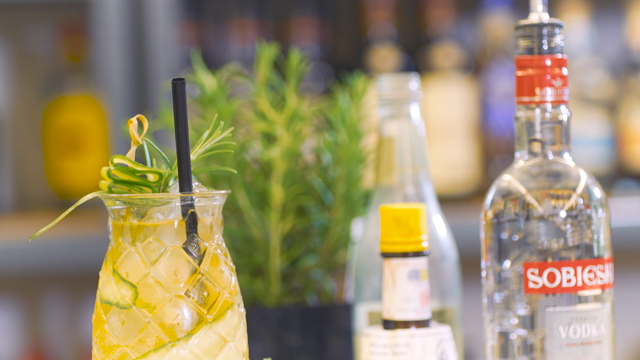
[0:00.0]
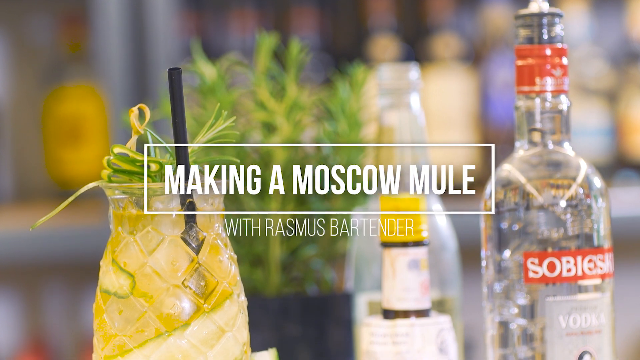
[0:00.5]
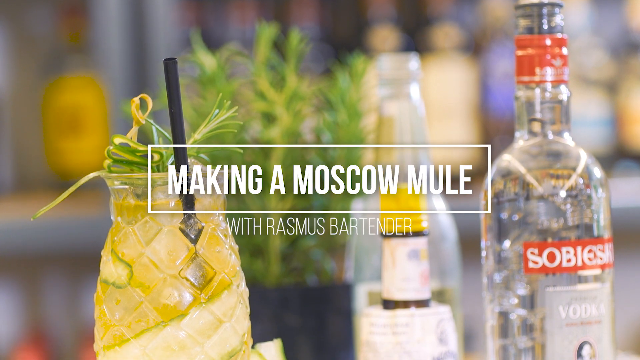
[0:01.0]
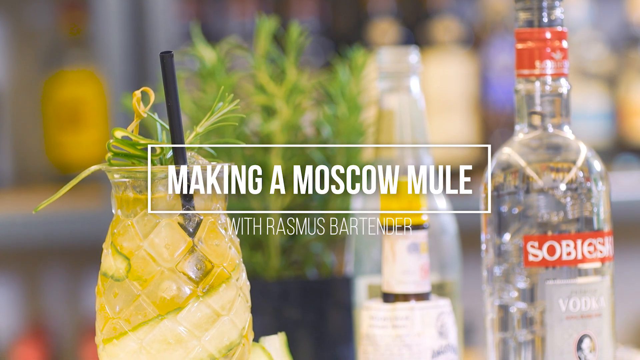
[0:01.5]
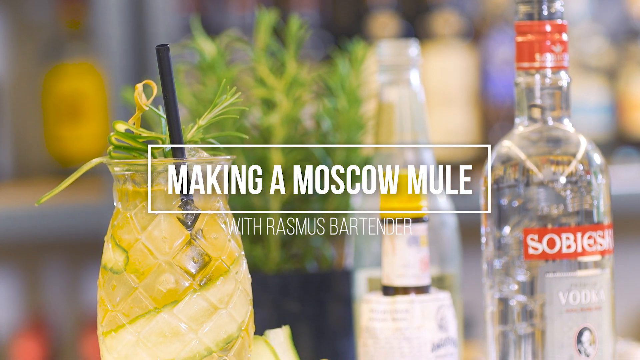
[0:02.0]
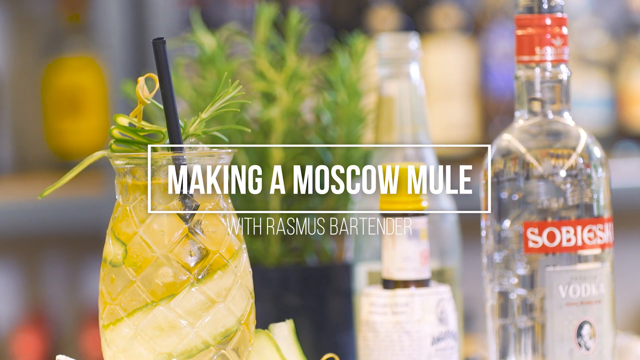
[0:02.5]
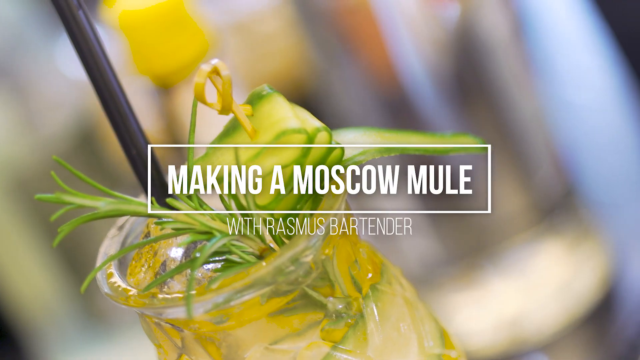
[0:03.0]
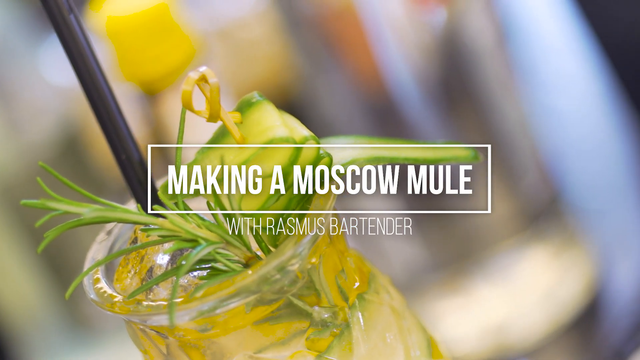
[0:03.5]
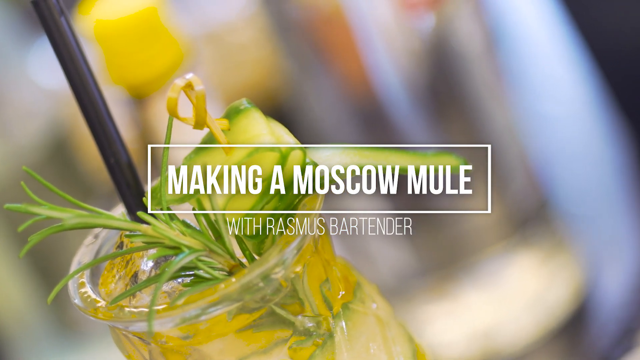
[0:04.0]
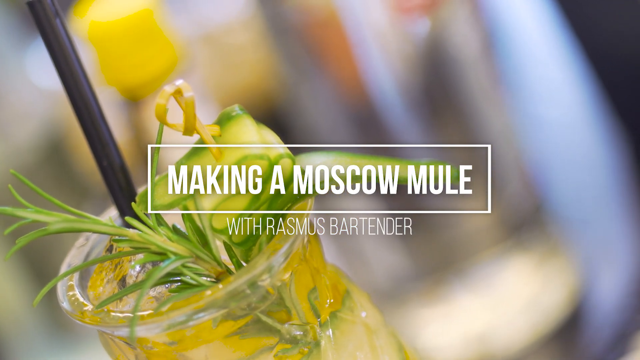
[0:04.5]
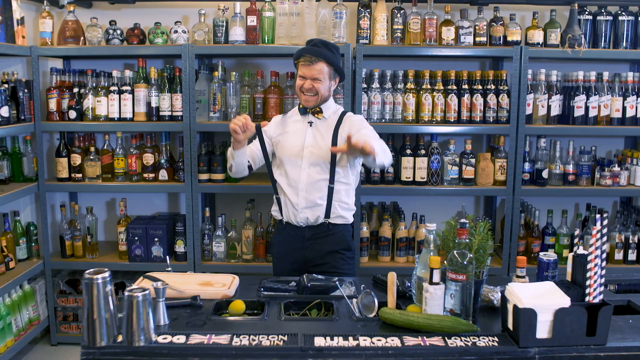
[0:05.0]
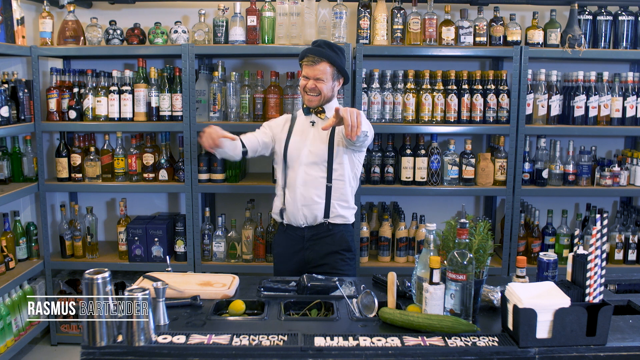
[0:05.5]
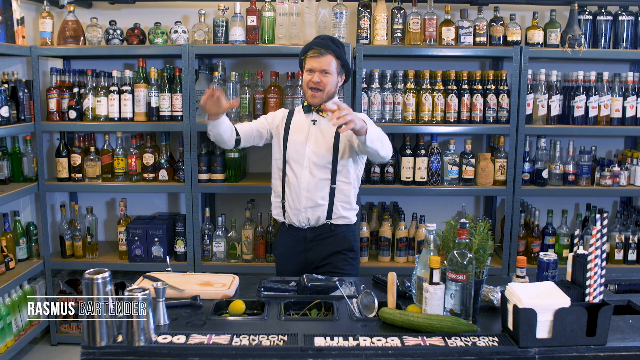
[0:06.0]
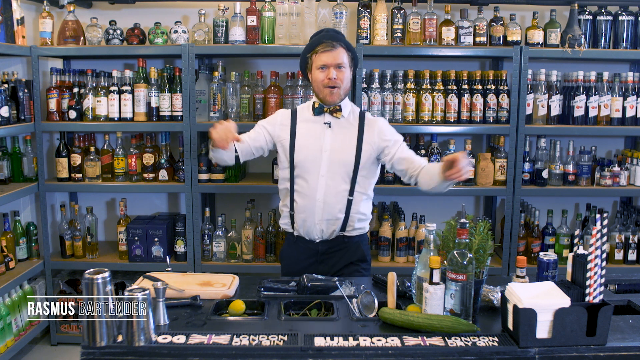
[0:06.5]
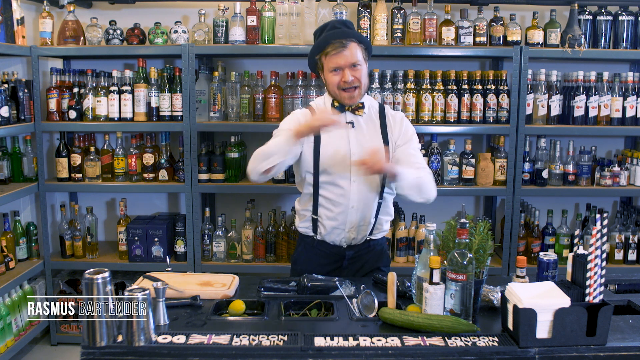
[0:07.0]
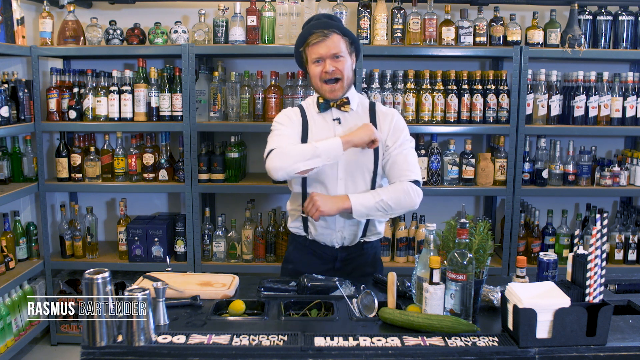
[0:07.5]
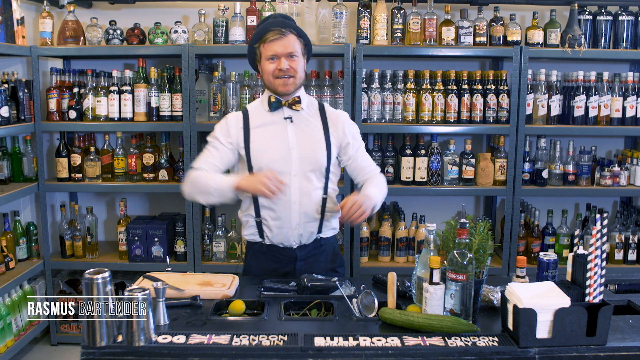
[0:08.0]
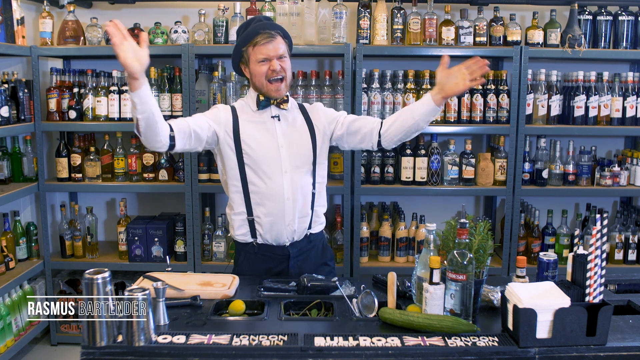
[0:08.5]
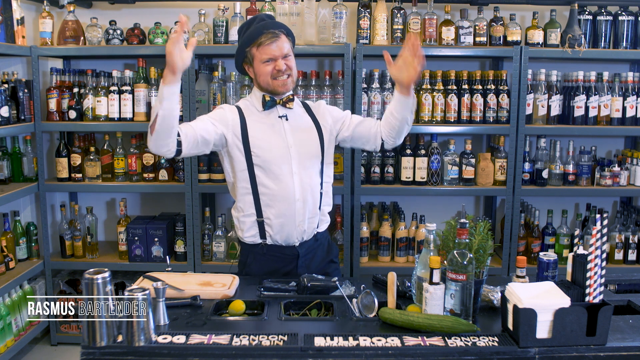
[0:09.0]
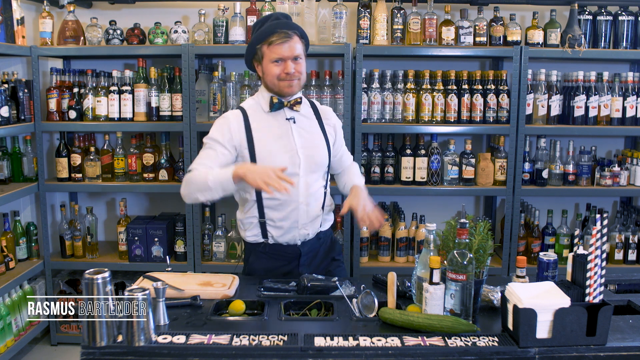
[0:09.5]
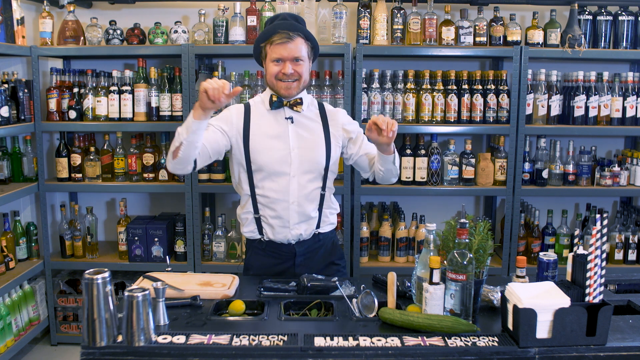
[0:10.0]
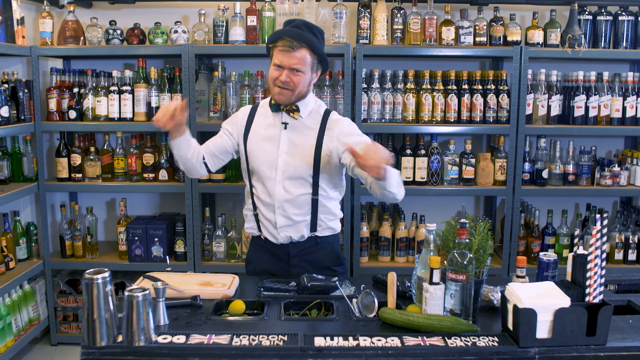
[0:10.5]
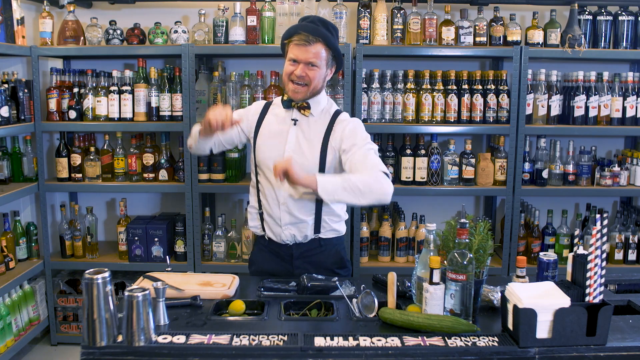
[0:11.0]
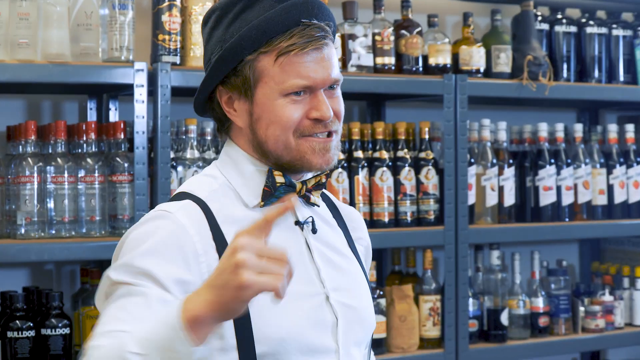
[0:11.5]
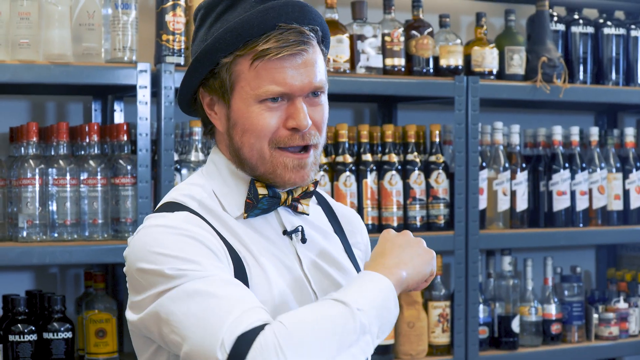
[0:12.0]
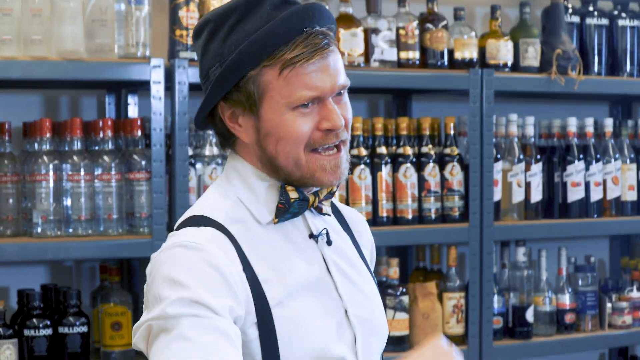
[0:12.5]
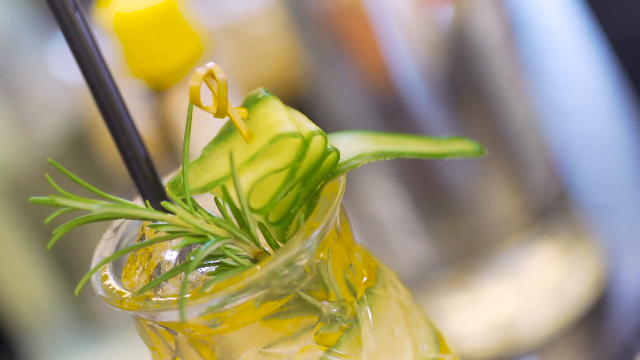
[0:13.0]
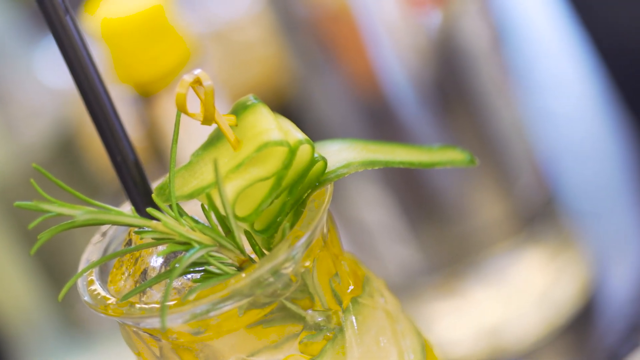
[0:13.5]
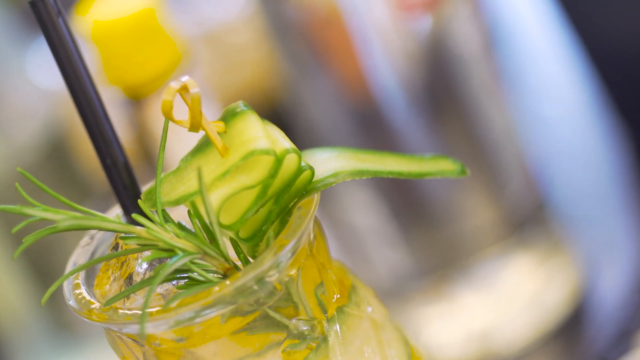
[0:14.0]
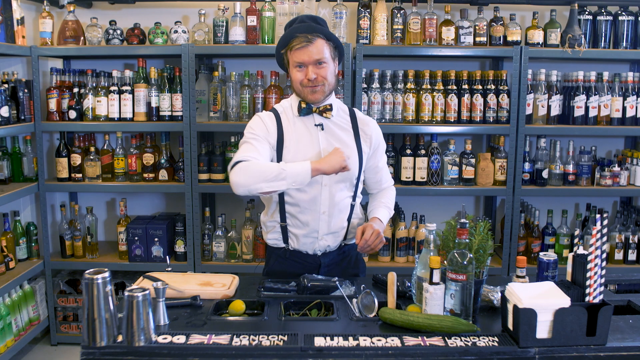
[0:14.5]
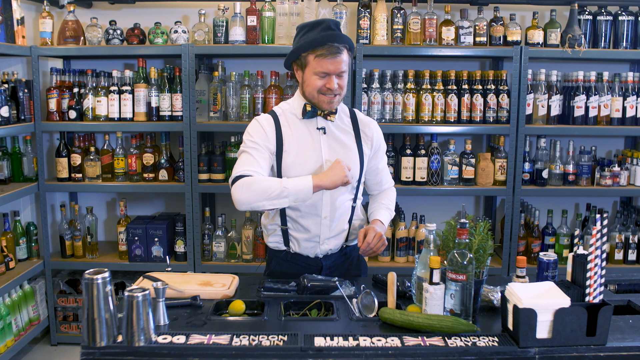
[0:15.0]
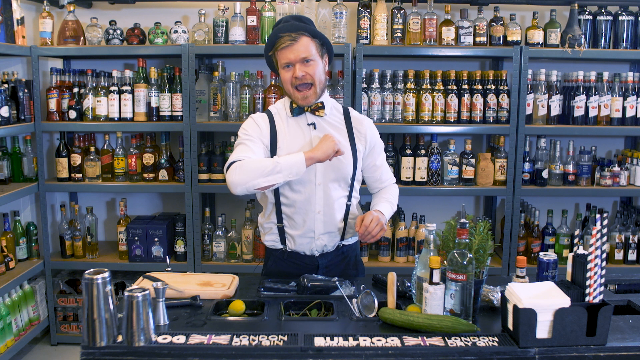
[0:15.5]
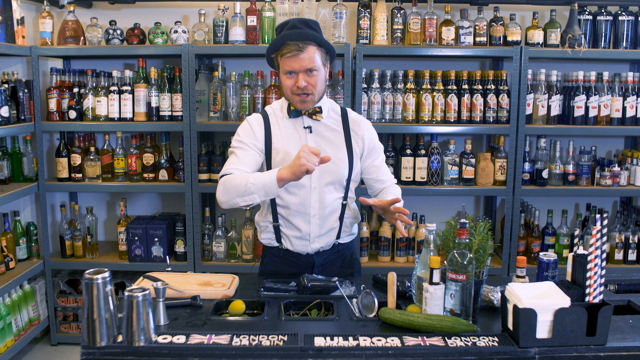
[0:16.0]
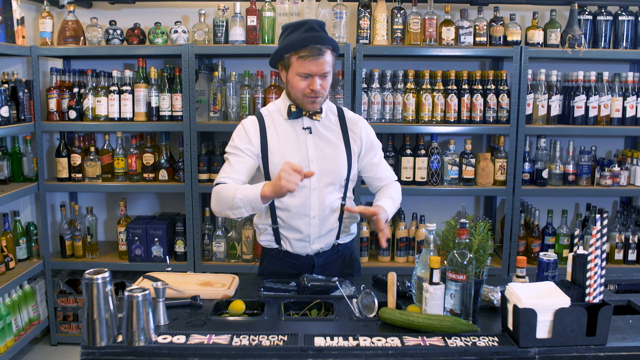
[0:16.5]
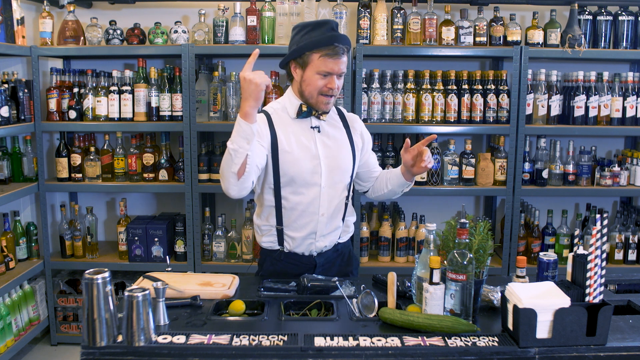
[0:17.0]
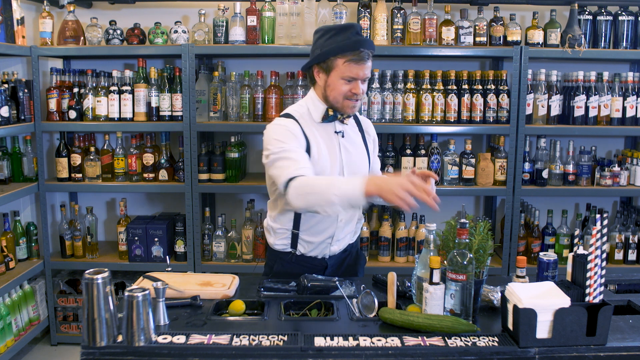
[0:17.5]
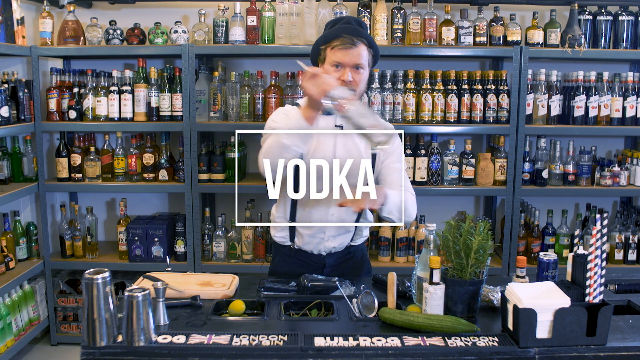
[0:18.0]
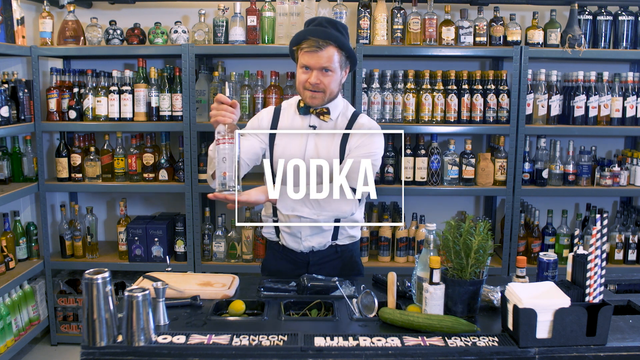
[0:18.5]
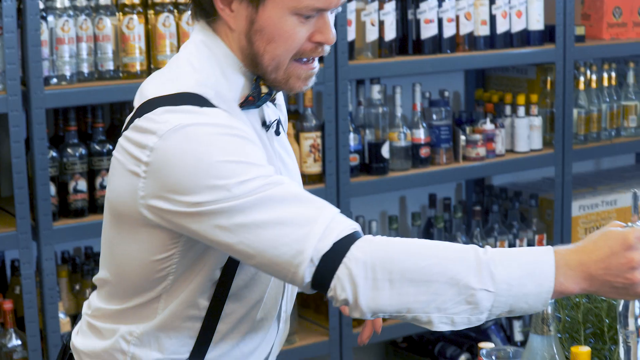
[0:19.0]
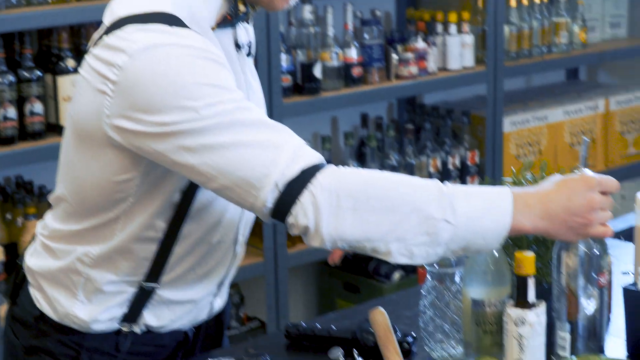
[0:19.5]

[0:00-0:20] The video opens on a still shot of a bottle with white text on a red banner, and next to it a jar holding a drink with a black straw. Text appears on screen in white: "making a Moscow Mule with Rasmus bartender." The glass cup rotates. The video then transitions to a bearded man wearing a black hat, a white shirt, black pants, black suspenders on his shoulders and a black tie; he holds one strap of the suspenders and pulls it. In the bottom left of the screen, white text reads "Rasmus Bartender," underlined at the top and bottom. The man, presumably Rasmus, stands behind a shelf with multiple alcoholic drinks at the back. He points his hand, claps, clenches both hands into fists as he moves them, raises them and gesticulates. He grabs the vodka from the table and puts it back on the table.